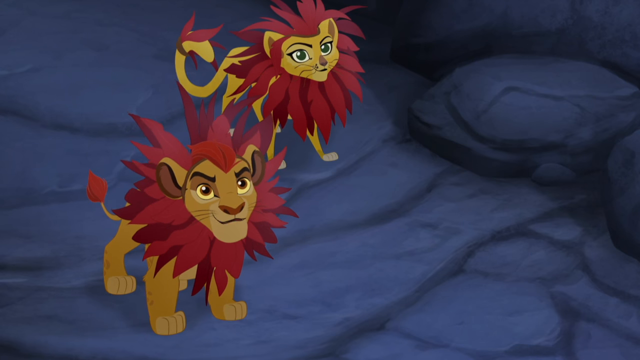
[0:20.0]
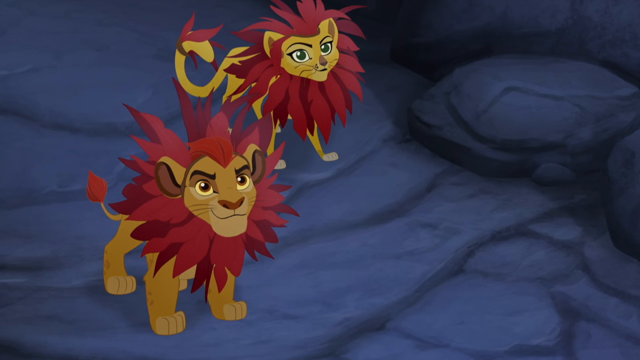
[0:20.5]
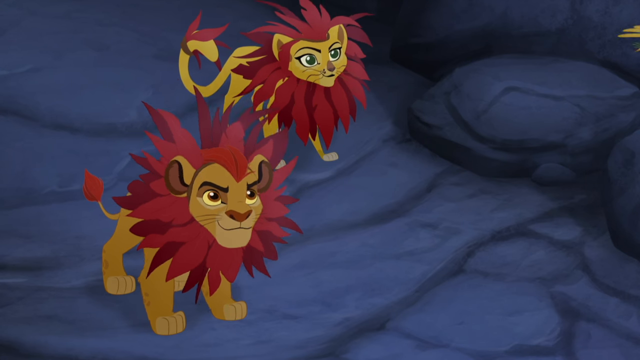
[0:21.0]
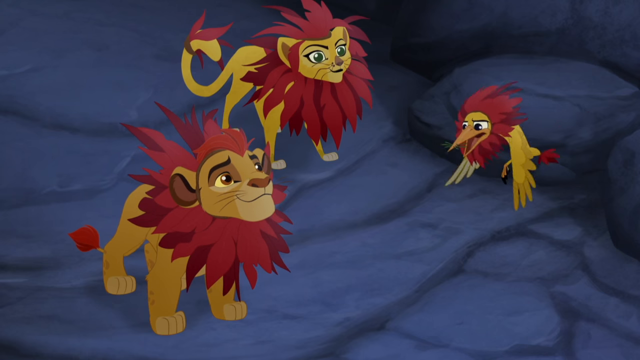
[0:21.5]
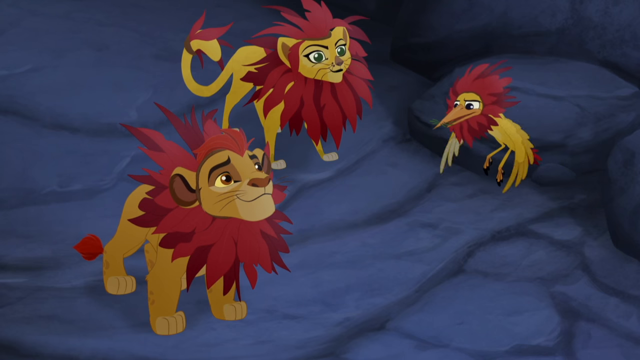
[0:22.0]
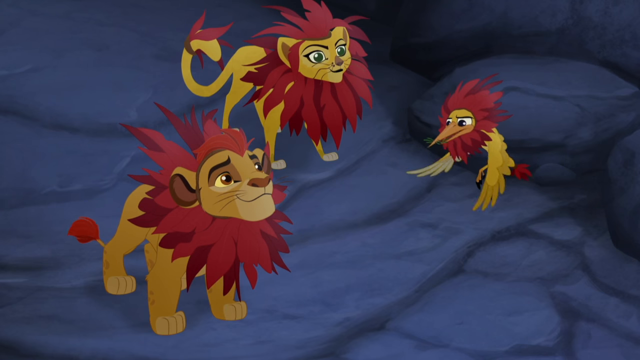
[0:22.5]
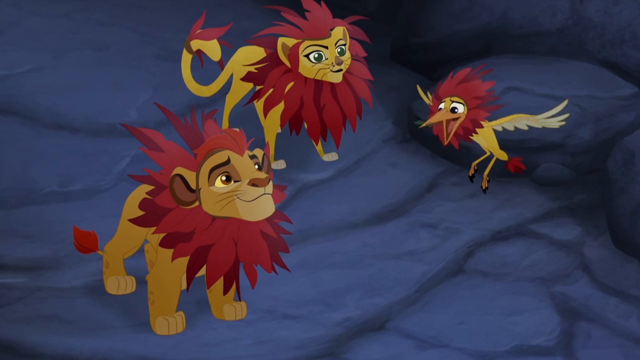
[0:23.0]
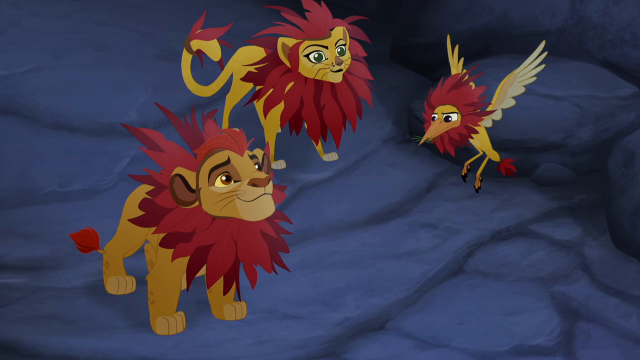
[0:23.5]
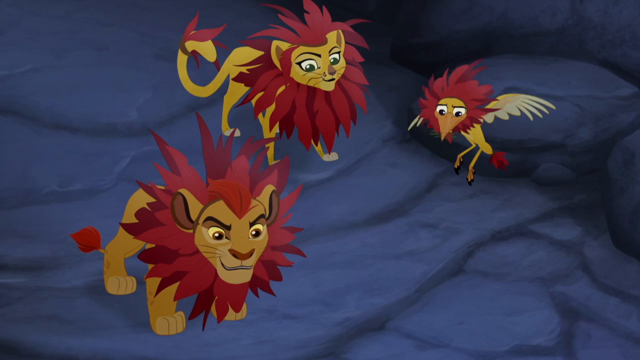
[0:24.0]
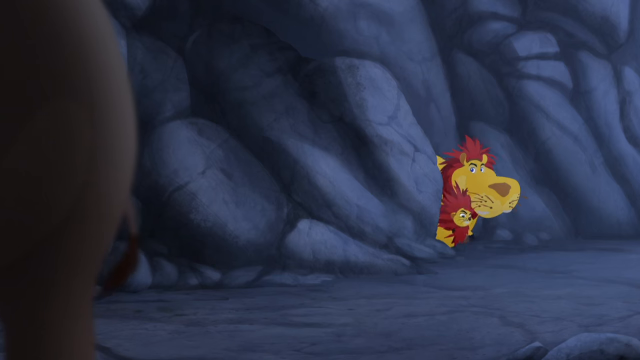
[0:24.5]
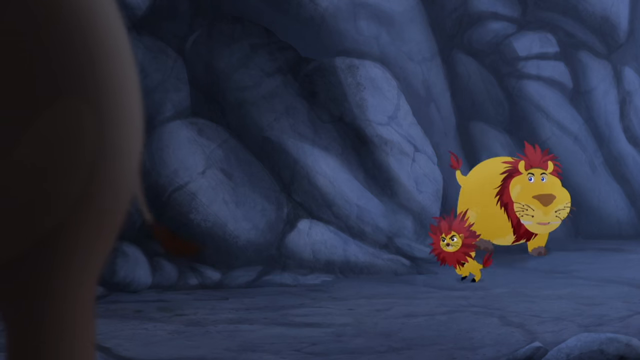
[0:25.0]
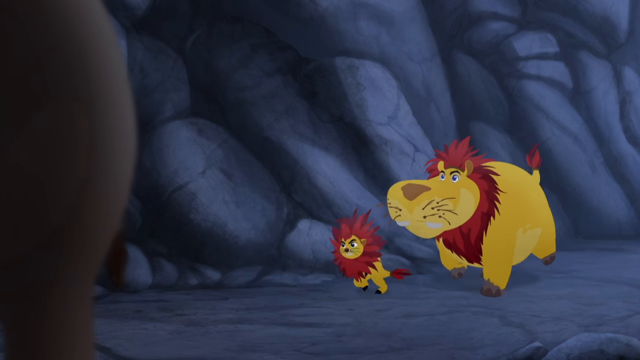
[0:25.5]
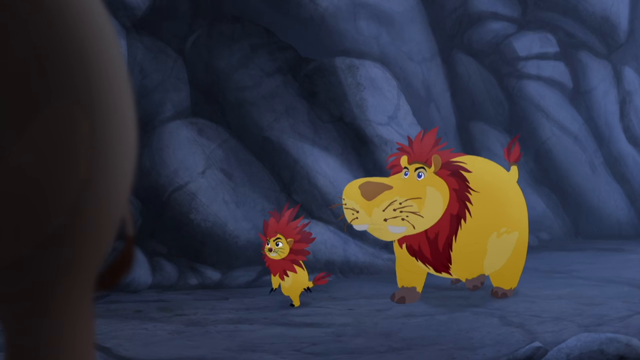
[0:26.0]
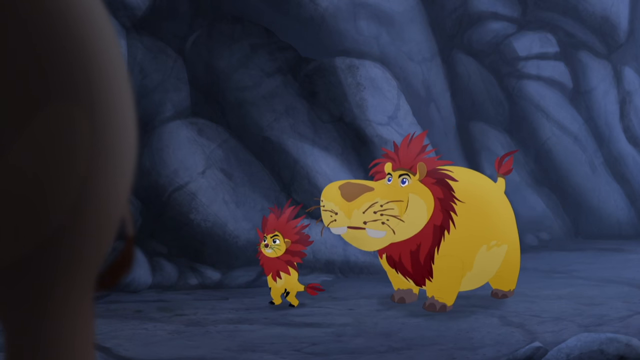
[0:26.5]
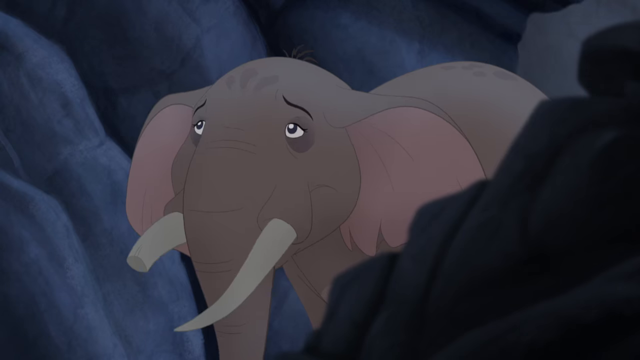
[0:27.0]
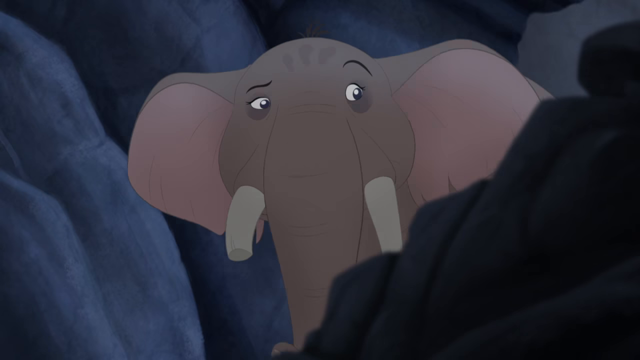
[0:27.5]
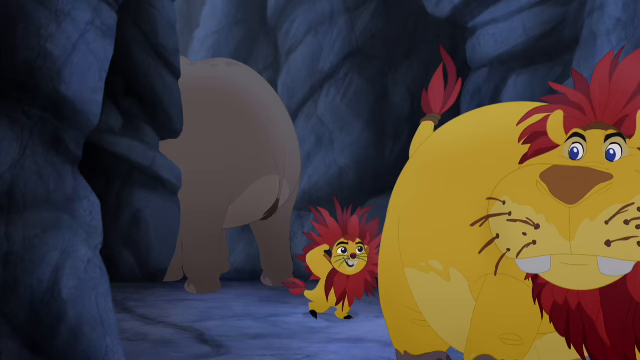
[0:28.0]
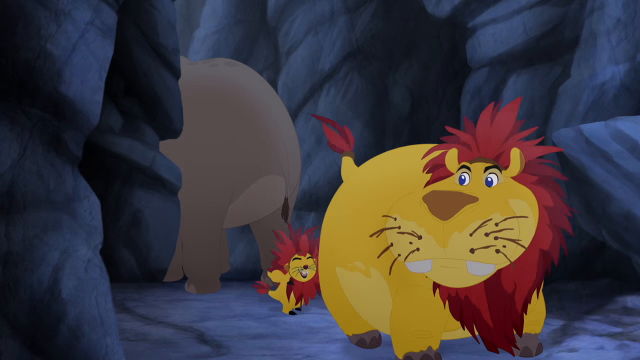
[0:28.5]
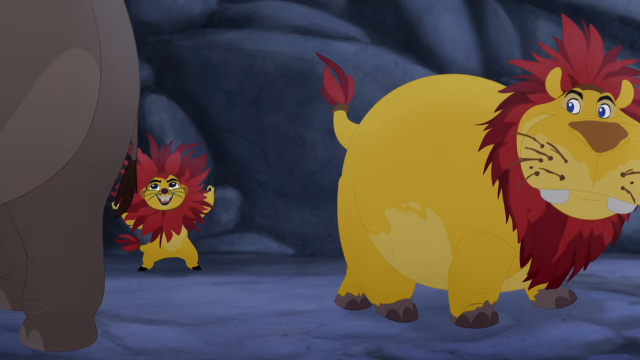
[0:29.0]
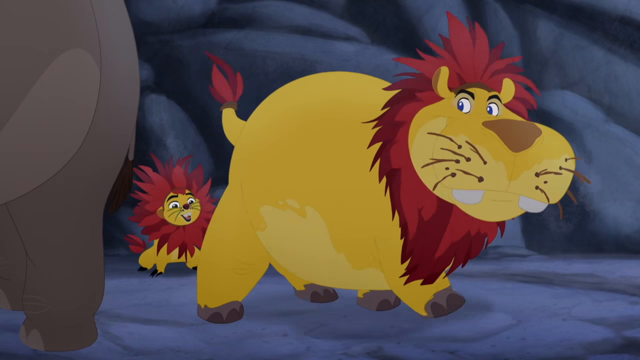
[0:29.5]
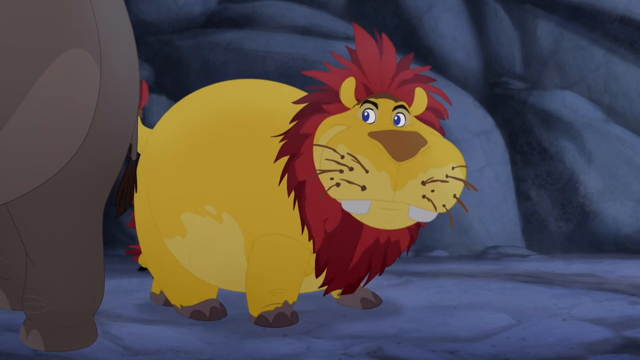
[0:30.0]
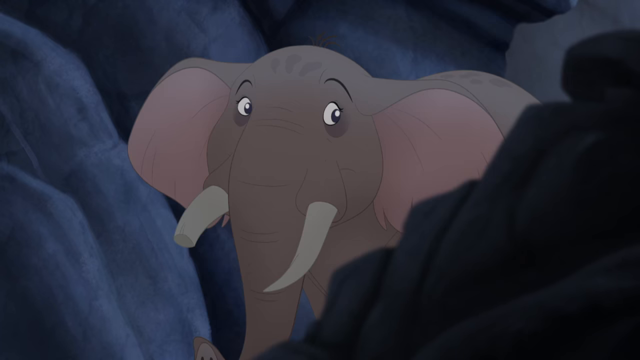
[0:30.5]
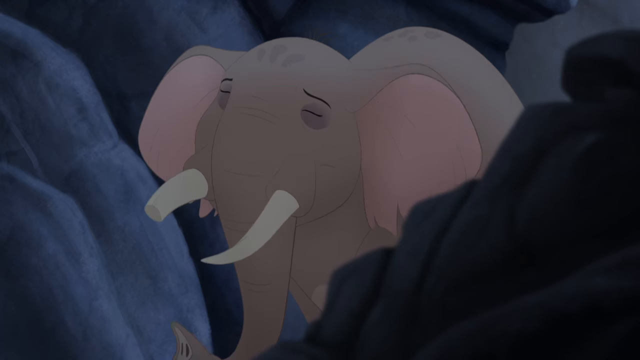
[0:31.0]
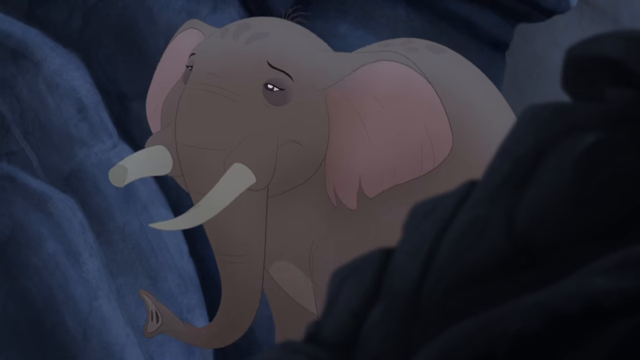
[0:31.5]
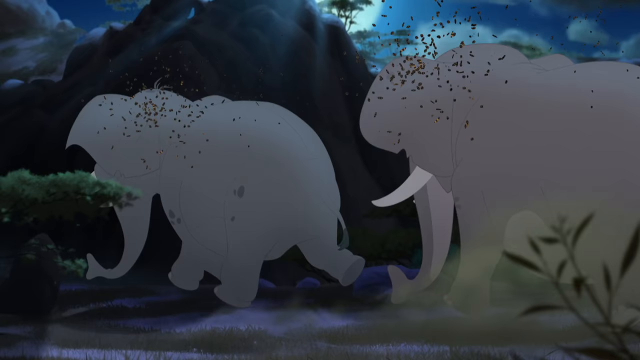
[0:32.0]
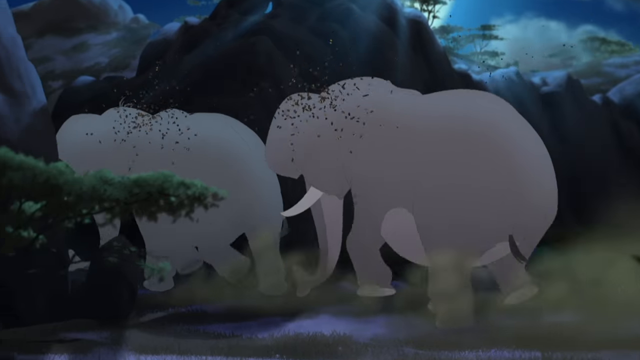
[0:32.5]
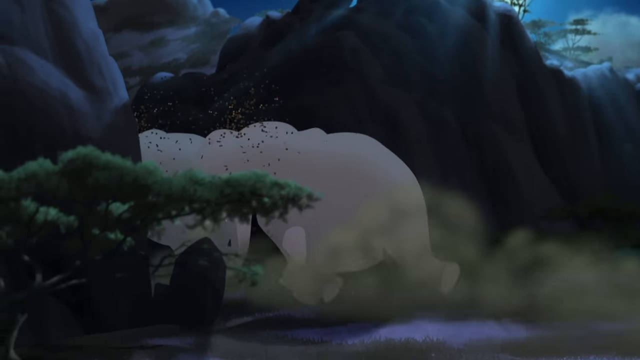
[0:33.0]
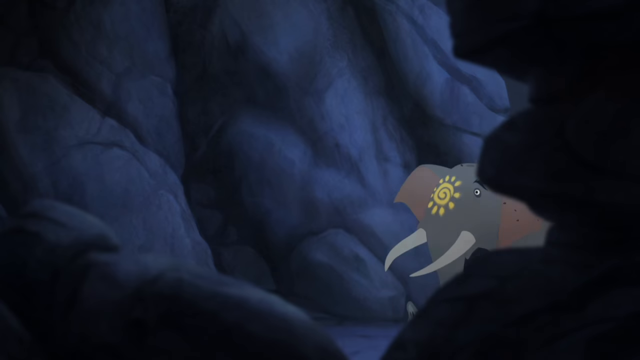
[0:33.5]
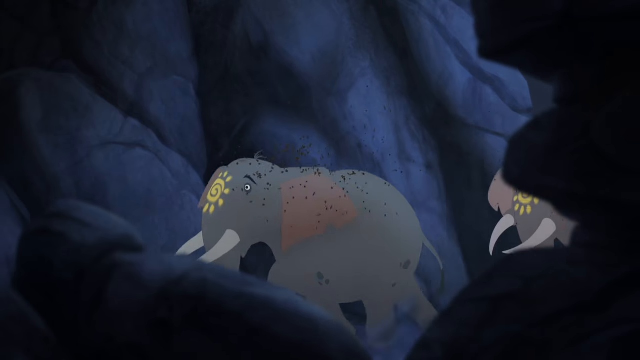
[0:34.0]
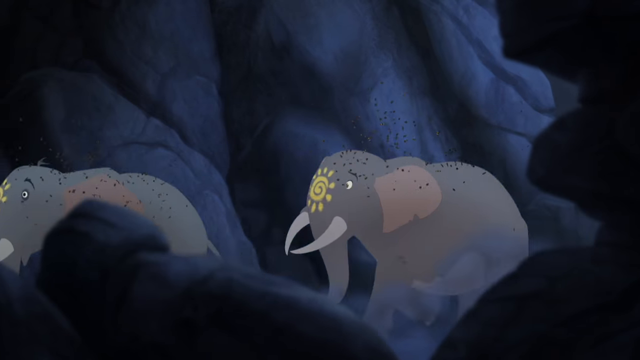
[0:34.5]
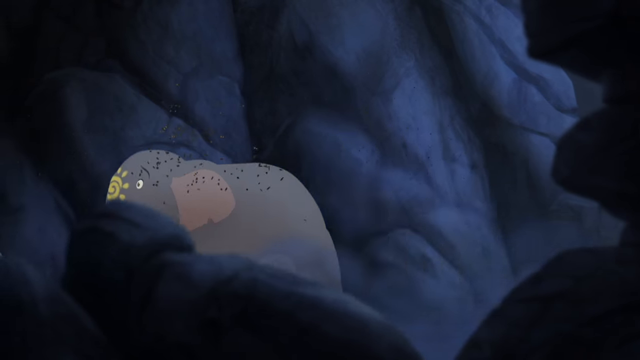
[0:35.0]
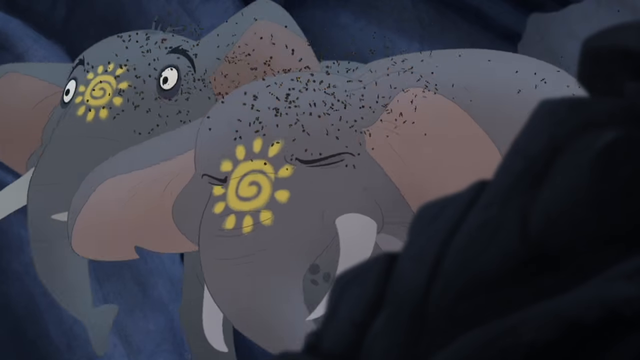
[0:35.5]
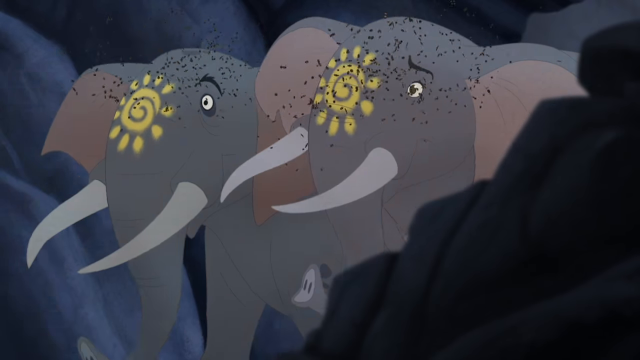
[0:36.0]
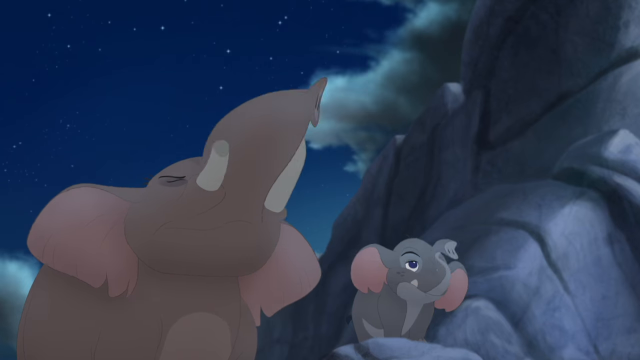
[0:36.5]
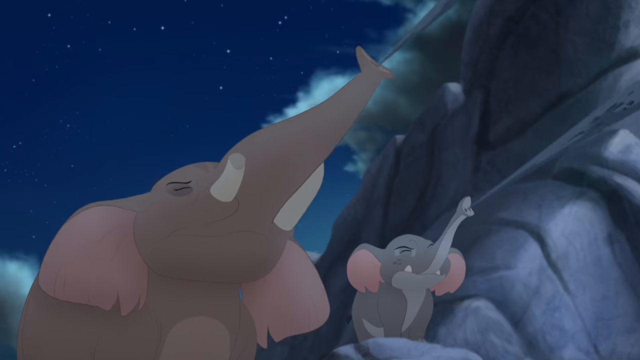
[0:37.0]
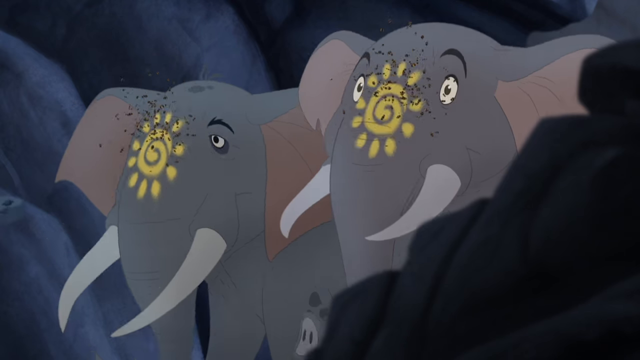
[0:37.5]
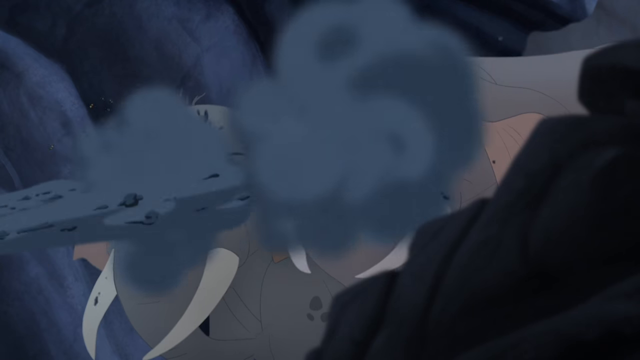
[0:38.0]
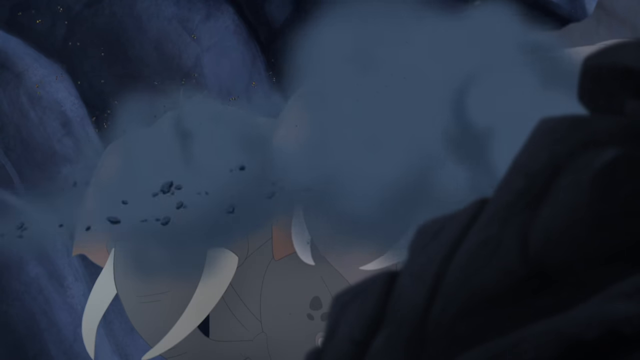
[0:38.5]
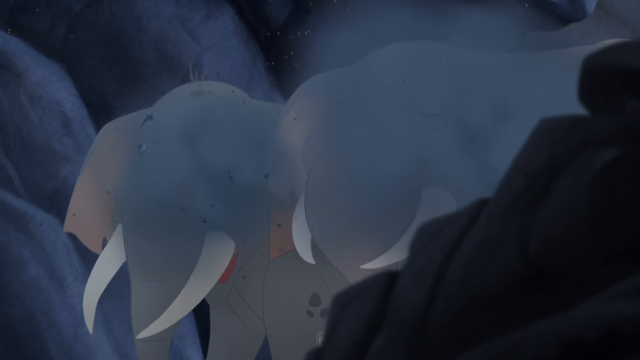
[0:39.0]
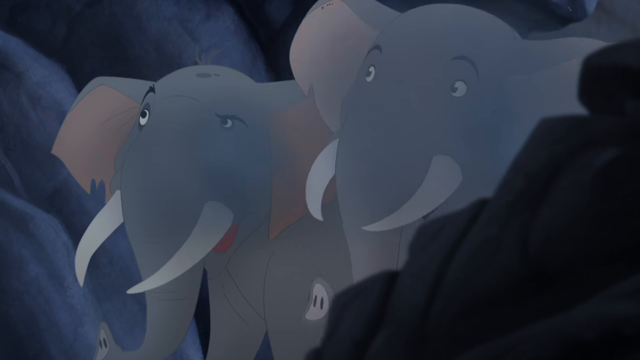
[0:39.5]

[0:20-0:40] Two cartoonish-looking lions are on a rocky surface area, with a couple of boulders on the right side of the screen. The lions have yellow fur and red manes; the male is in the bottom left corner and the female is roughly in the top center. The male has brownish-looking eyes and the female has green-looking eyes. The male lion talks. A bird flies into the frame on the right side of the screen; it has yellow feathers and red feathers around its head and on the end of its tail, and it flaps its wings while flying and talking to the male lion. The male lion talks again. Two more lions come out of a crack in the rock face: one is really small, and the other looks really obese and somewhat chubby. Both have yellow fur and red manes too. The obese lion talks; his muzzle, mouth and teeth look a lot like a hippo's, though he is not a hippo. A large elephant with two tusks appears, one tusk whole and pointed and the other broken in half. The obese lion puts its bottom up against the big elephant, apparently trying to help it get unstuck from between the rocks.